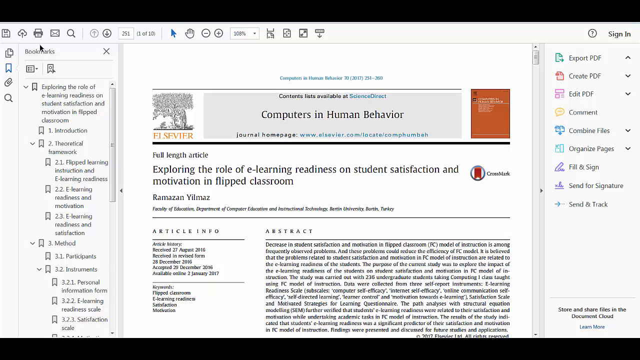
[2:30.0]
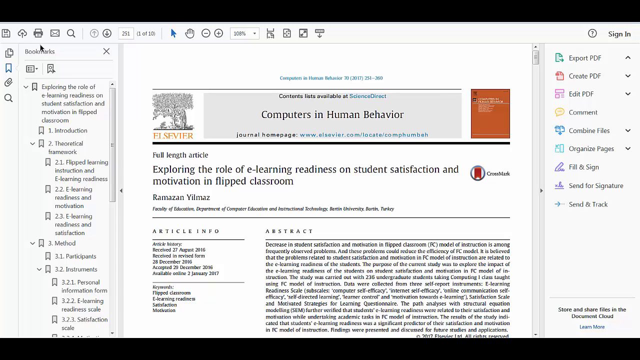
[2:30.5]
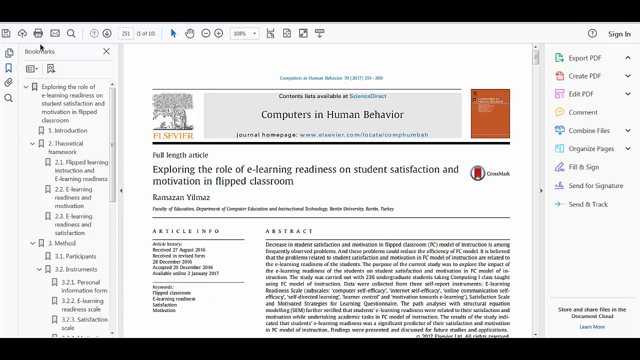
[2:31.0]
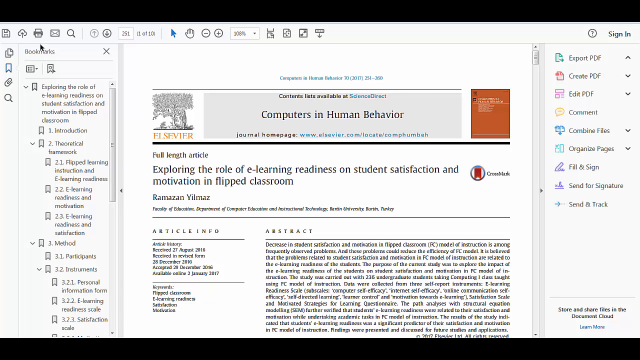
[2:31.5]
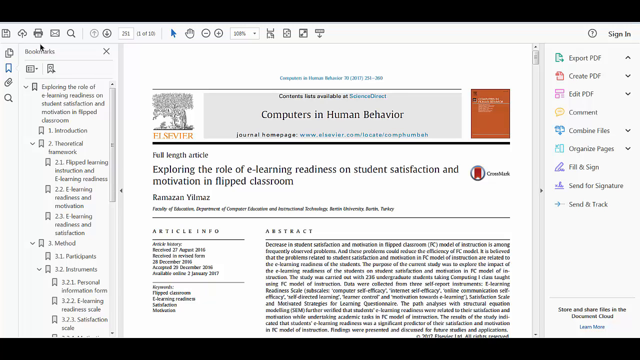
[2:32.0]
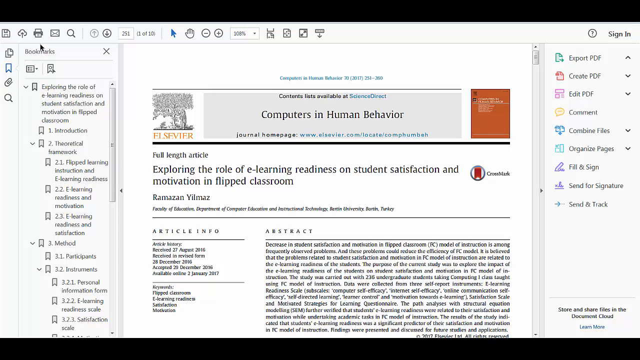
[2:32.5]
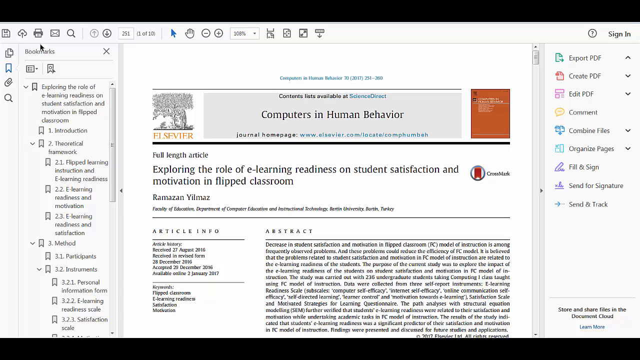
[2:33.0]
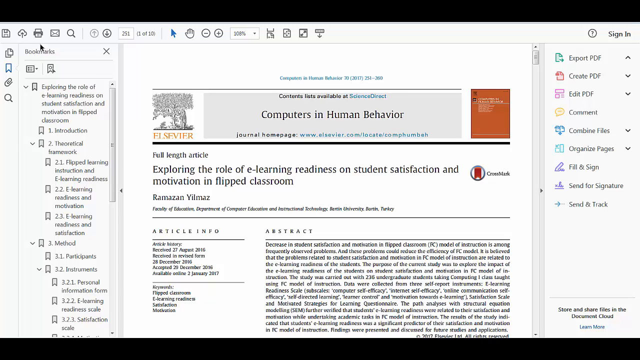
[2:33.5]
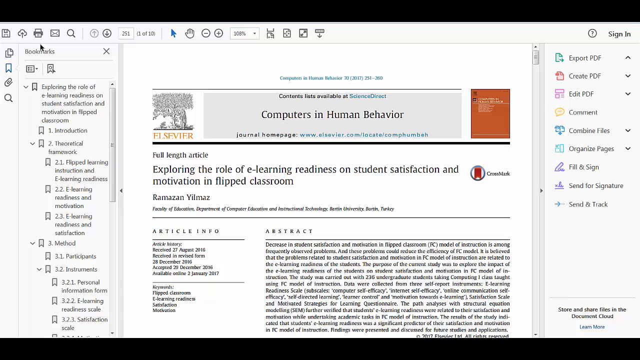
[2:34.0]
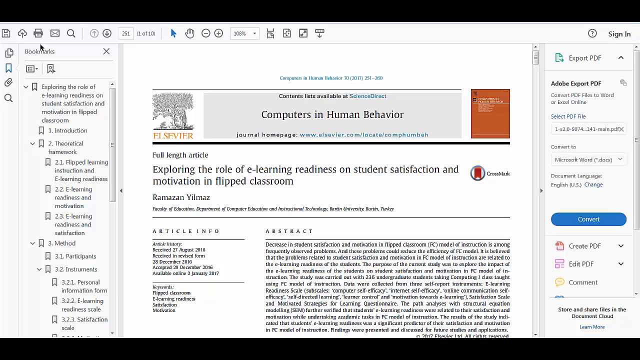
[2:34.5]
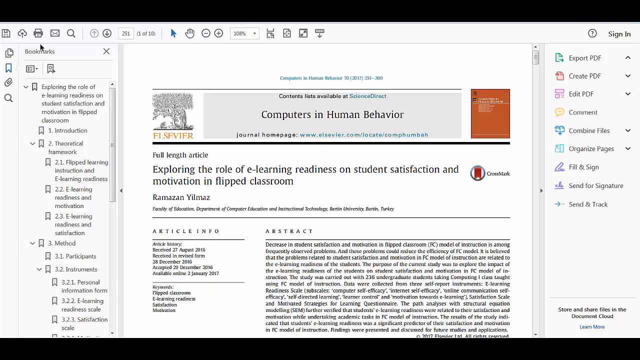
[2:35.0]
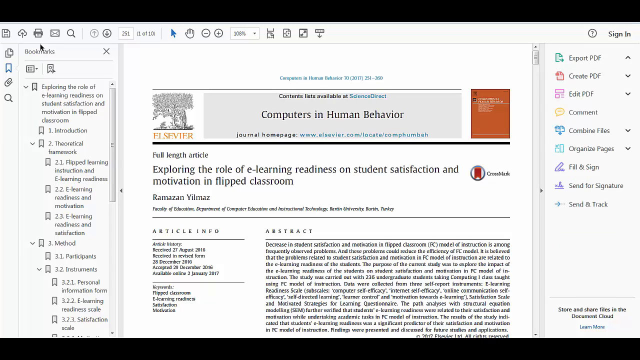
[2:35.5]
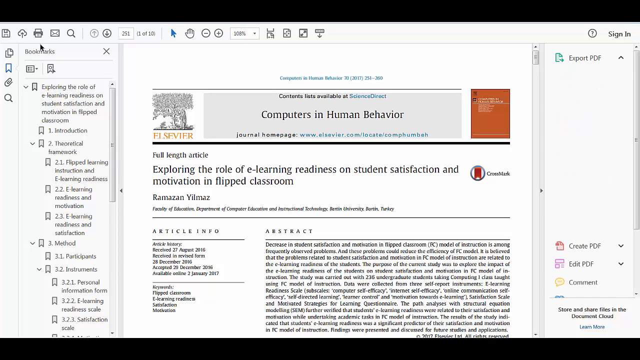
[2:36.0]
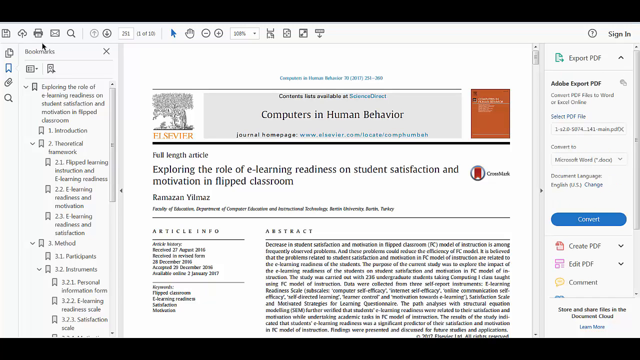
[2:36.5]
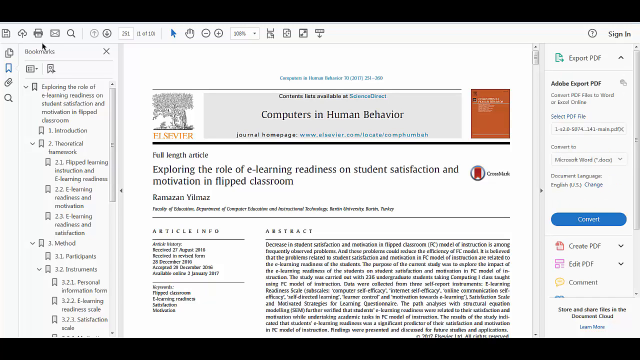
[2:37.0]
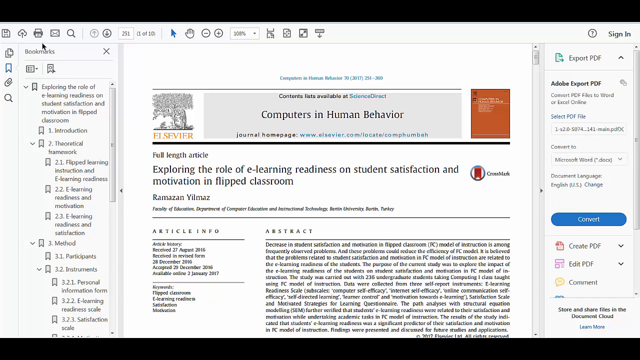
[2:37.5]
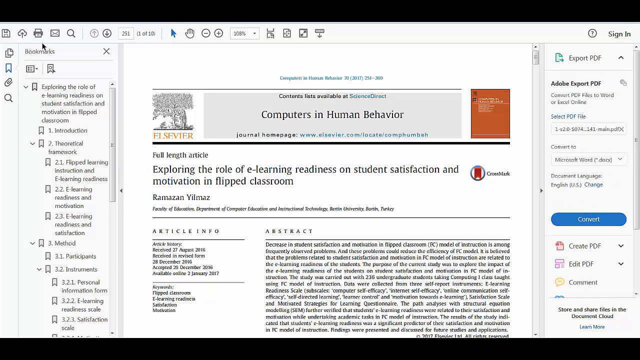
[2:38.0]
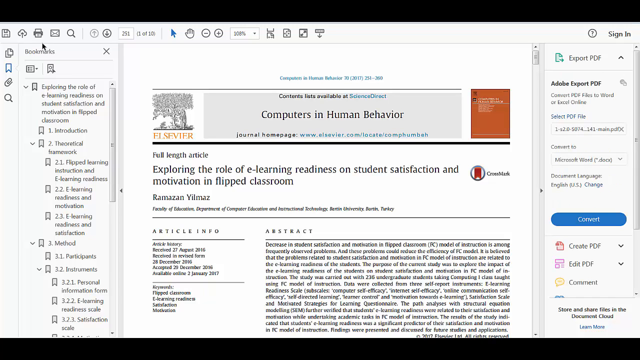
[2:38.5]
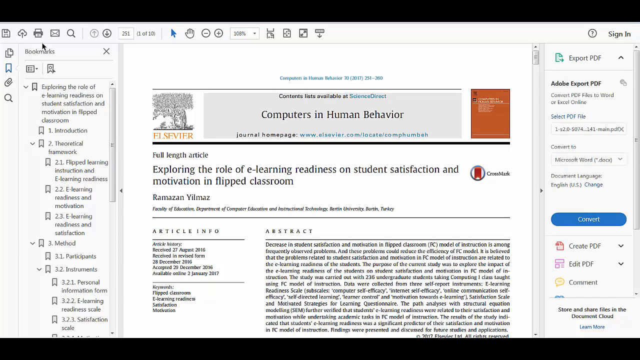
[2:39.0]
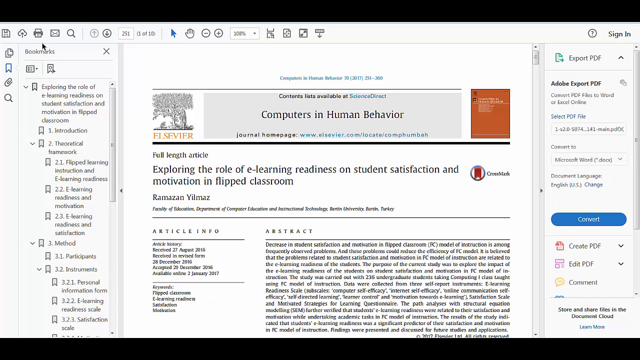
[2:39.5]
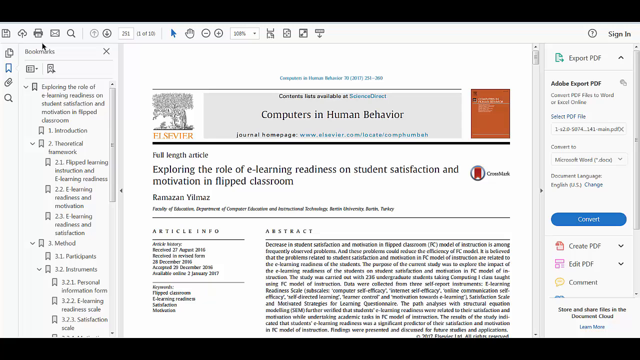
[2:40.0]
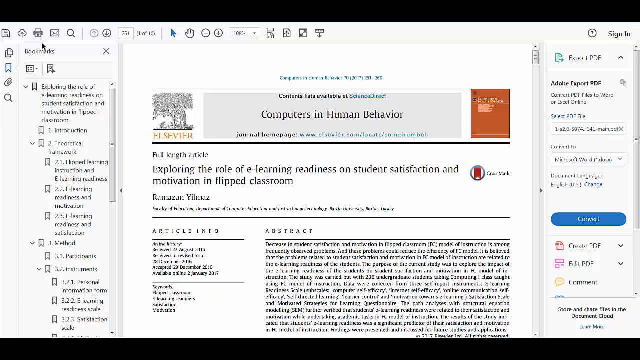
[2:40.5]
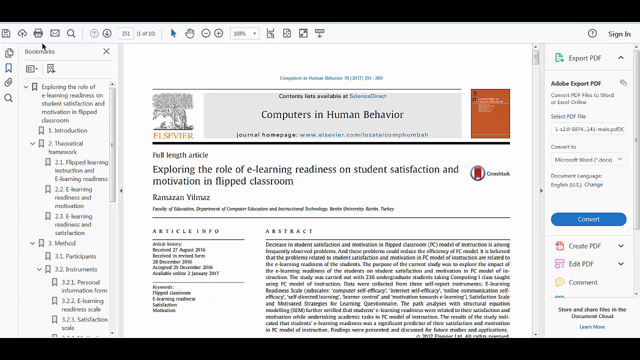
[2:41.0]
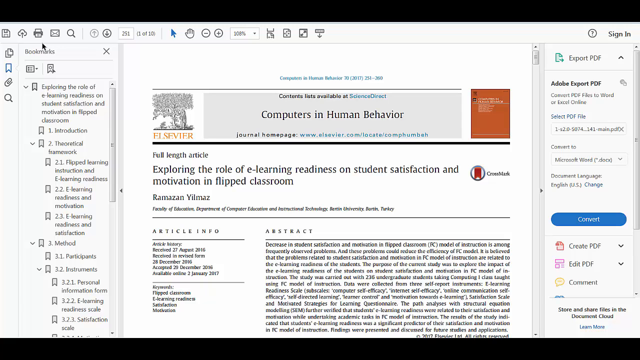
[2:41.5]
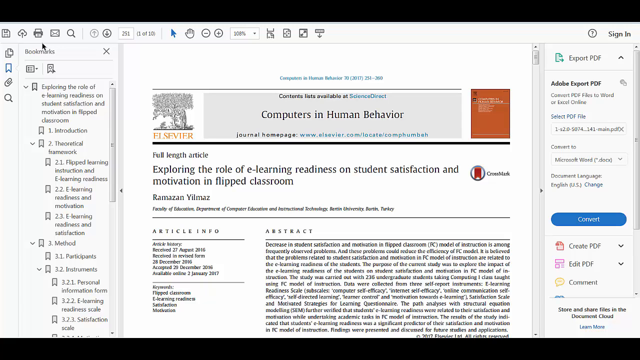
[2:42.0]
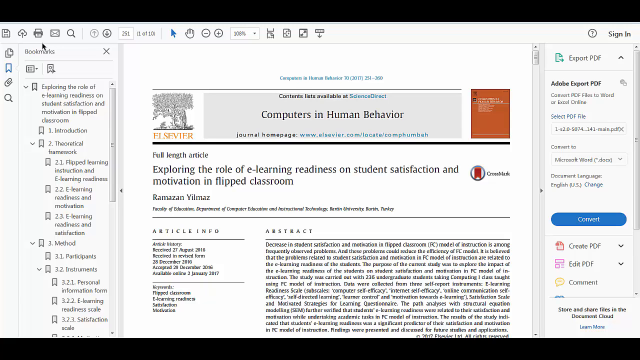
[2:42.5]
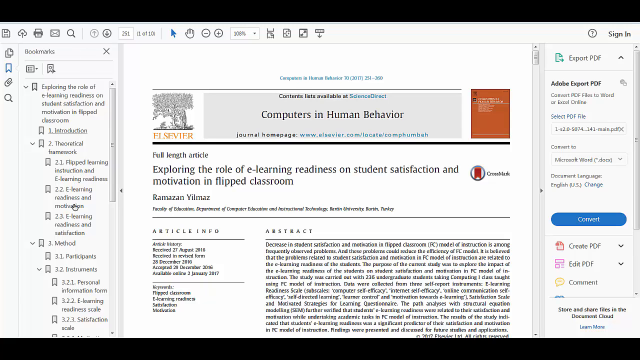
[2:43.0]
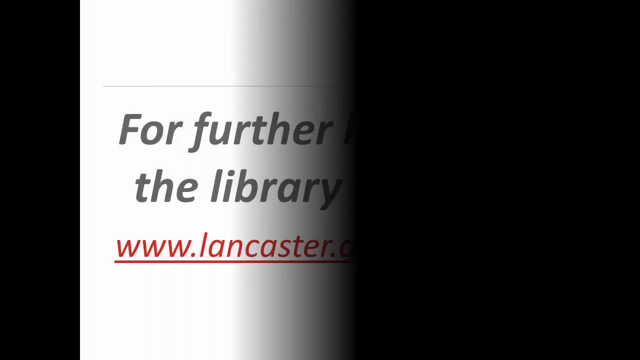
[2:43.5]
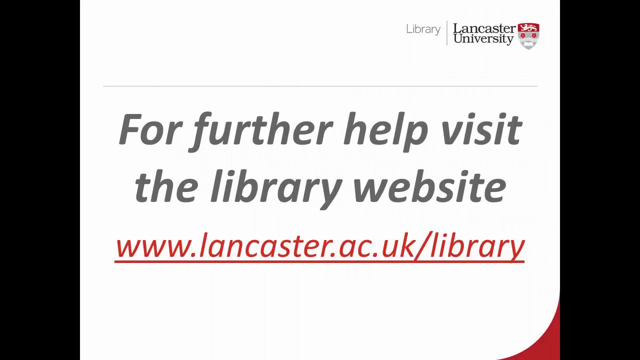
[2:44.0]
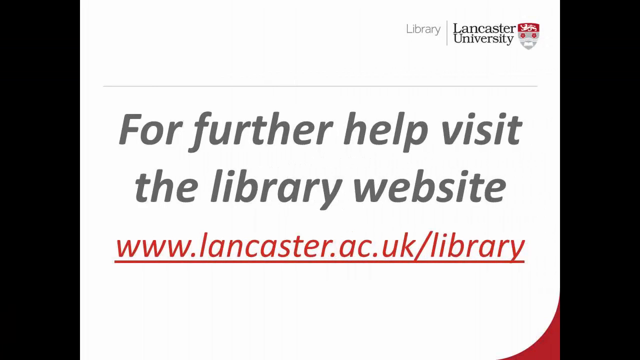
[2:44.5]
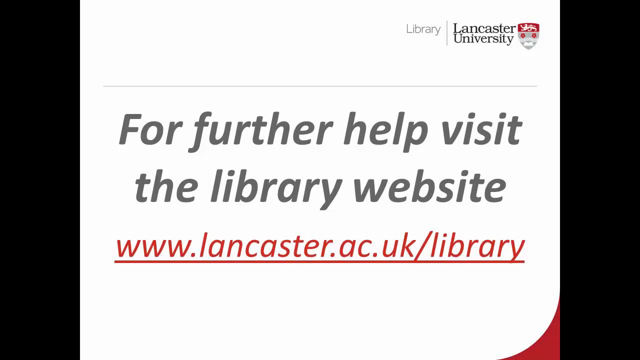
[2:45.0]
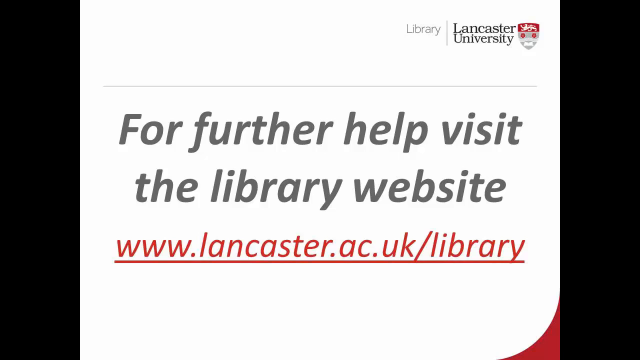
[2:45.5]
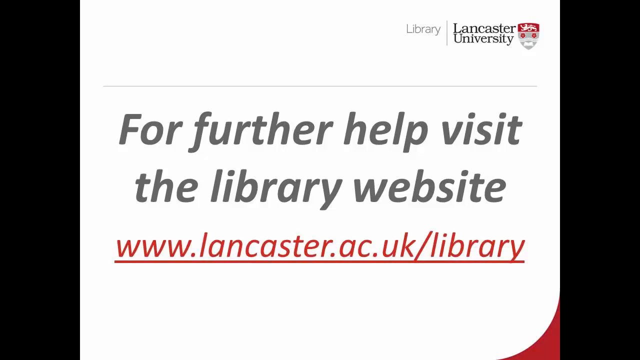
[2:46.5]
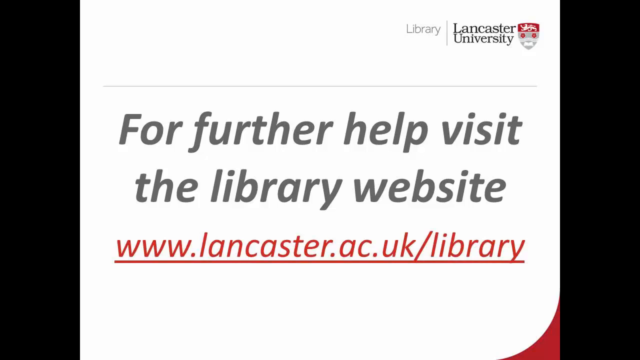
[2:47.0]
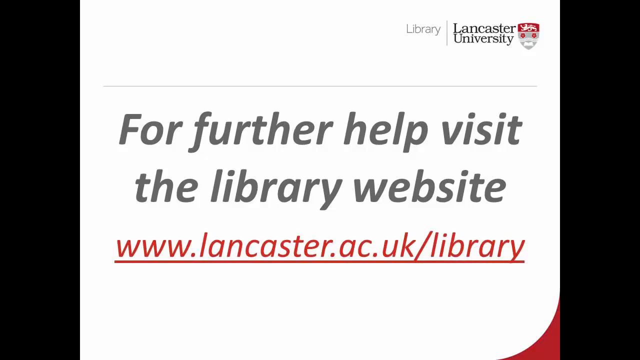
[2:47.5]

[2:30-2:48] An article chosen by the person researching on the Lancaster University site is shown, presented by "Computers in Human Behaviour" and called "Exploring the role of eLearning readiness on student satisfaction and motivation in flipped classroom". This is the full-length article, and the person clicks on something on the right side of the screen and appears to be choosing whether to download or export it. The next screen has a white background with grey words reading "for further help visit the library website", followed by the underlined website address in red: "www.lancaster.ac.uk/library".